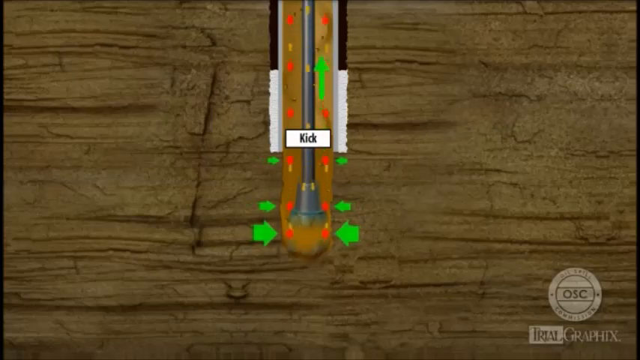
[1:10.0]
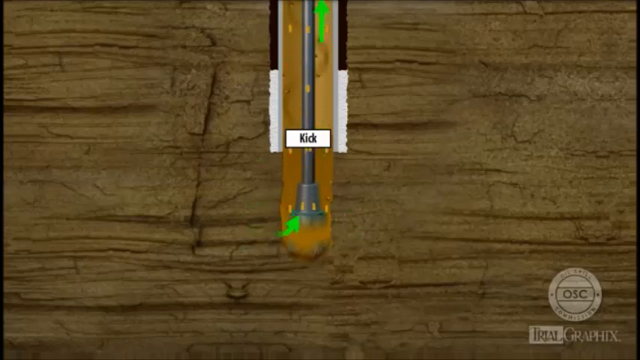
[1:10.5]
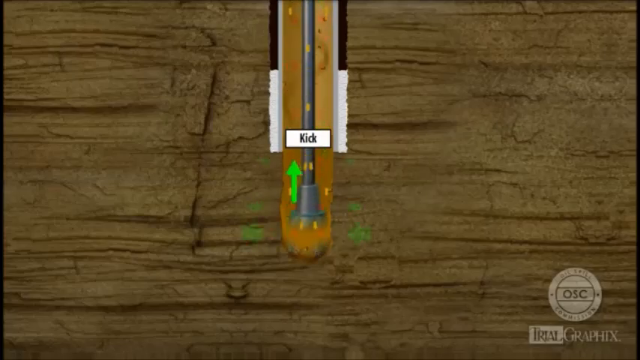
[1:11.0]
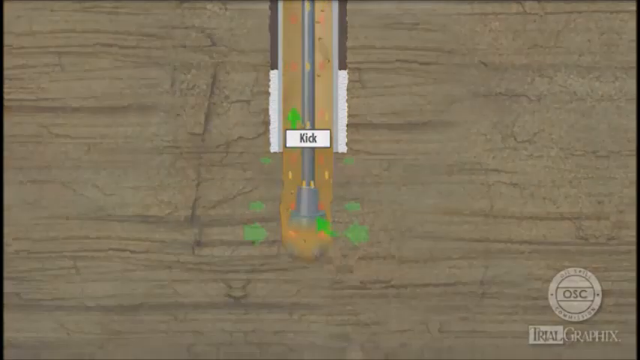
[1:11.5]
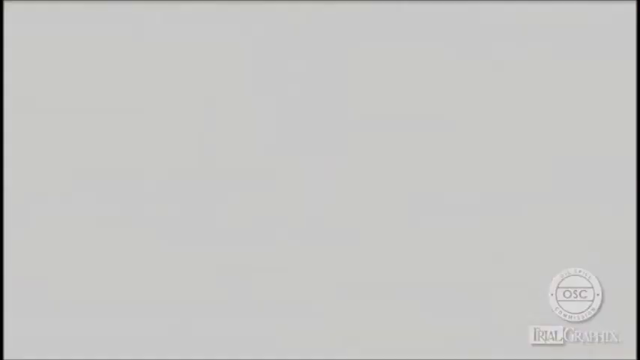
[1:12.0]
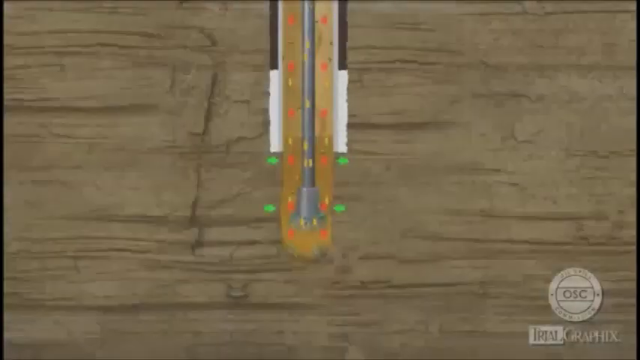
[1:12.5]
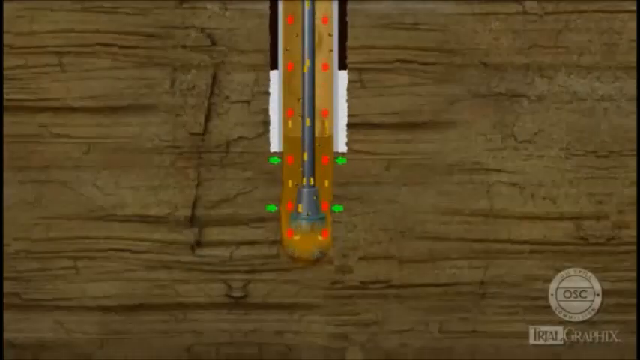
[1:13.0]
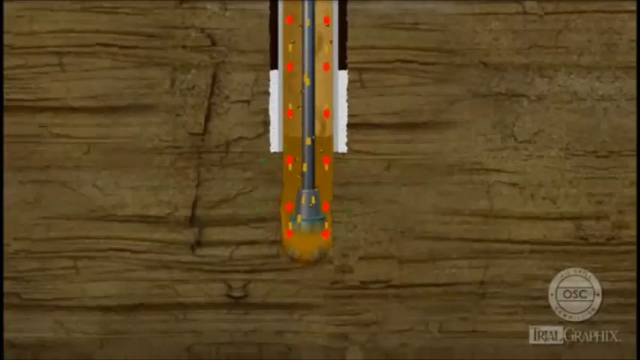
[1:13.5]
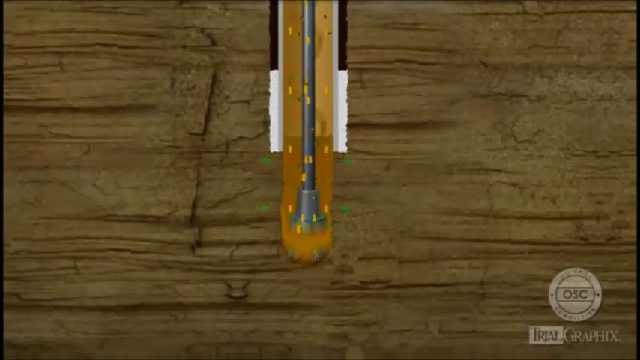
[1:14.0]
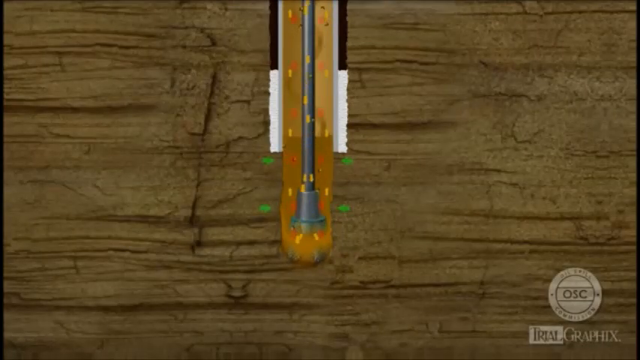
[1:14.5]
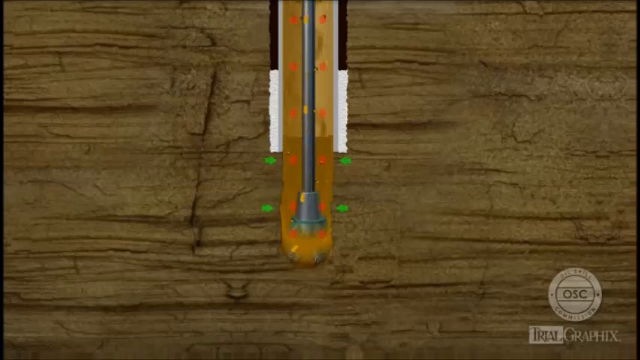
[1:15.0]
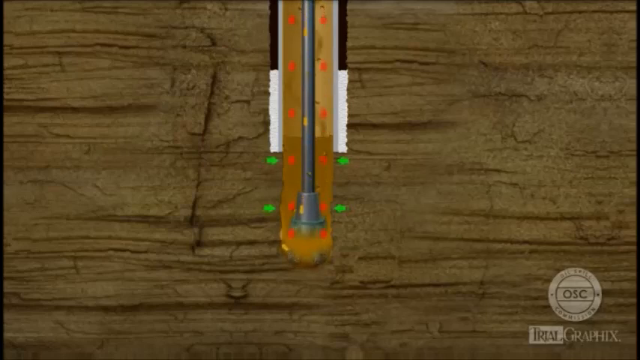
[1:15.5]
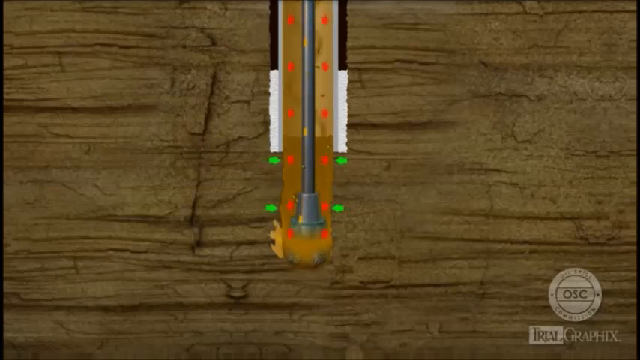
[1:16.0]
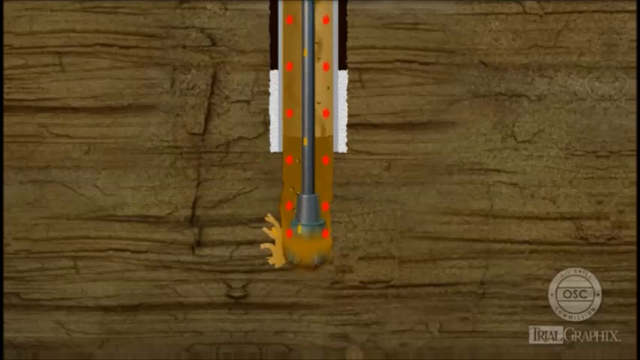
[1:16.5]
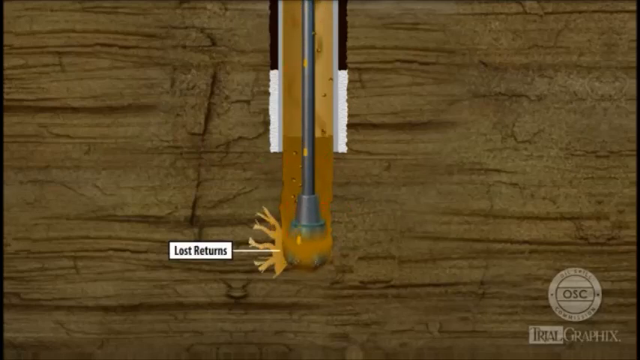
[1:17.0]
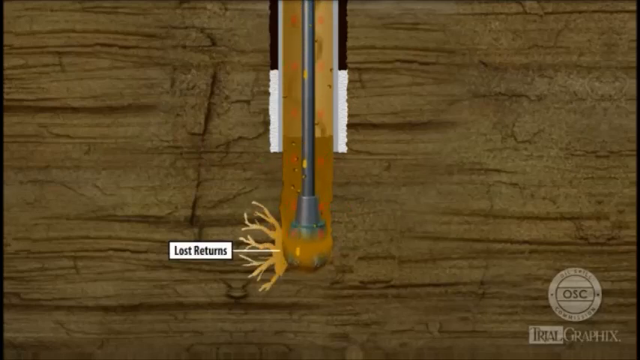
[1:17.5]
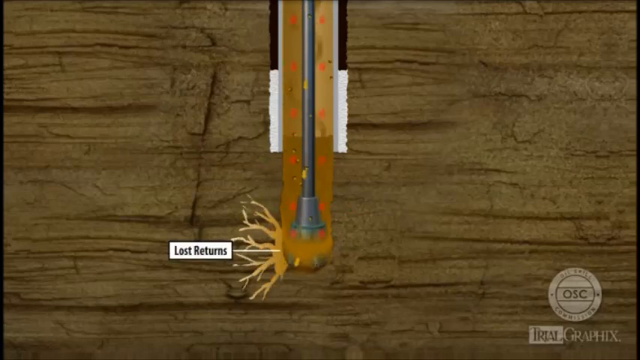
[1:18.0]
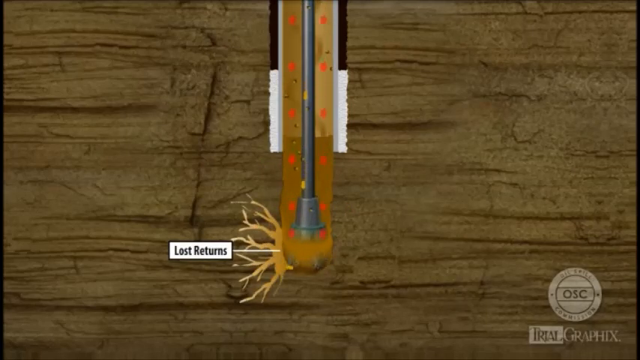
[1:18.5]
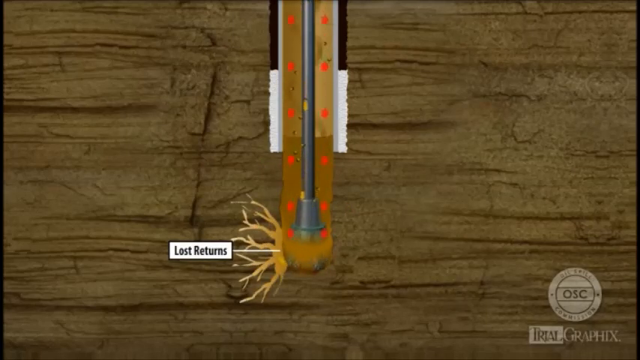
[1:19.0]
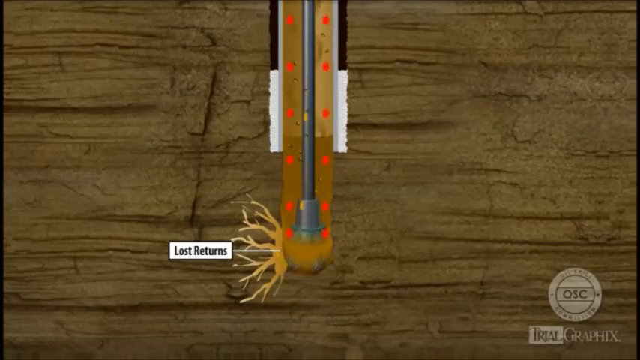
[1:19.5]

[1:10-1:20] The drill continues down the block of wood with several green arrows: four small green arrows point toward the end of the drill, and two larger green arrows right below also point toward the end of the drill. Red and yellow particles move upwards from the drill, possibly representing the progress. The word "kick" appears near the end of the drill in small black font within a white rectangular background. A branch forms at the very tip of the drill, and the scene fades out.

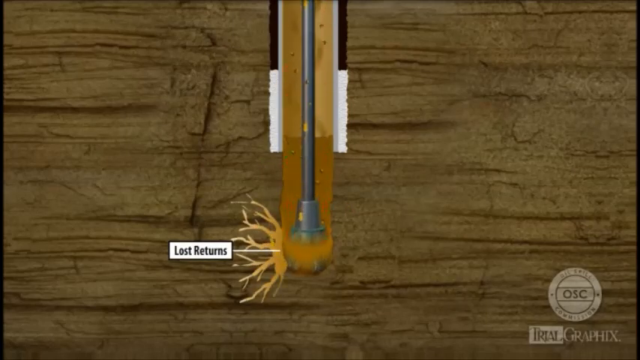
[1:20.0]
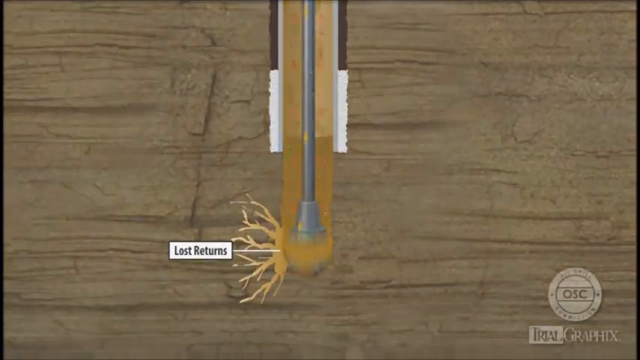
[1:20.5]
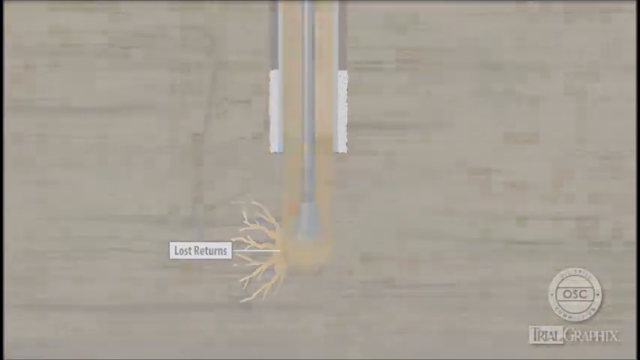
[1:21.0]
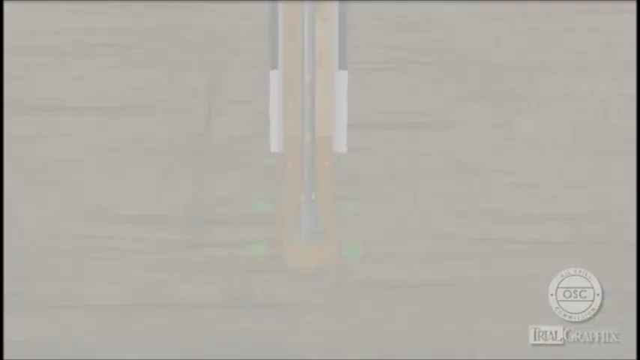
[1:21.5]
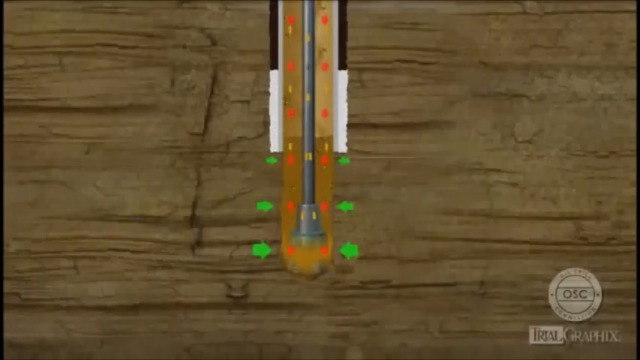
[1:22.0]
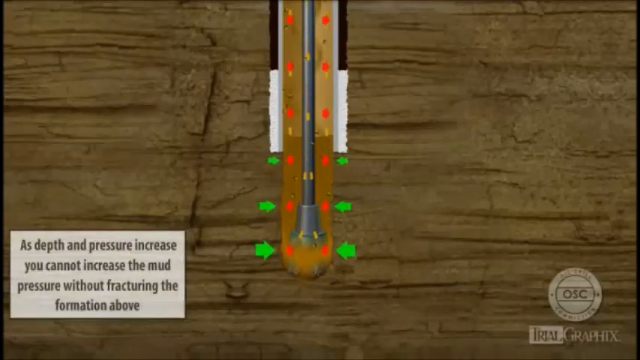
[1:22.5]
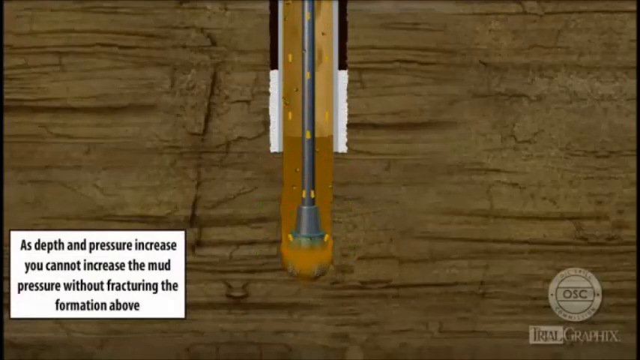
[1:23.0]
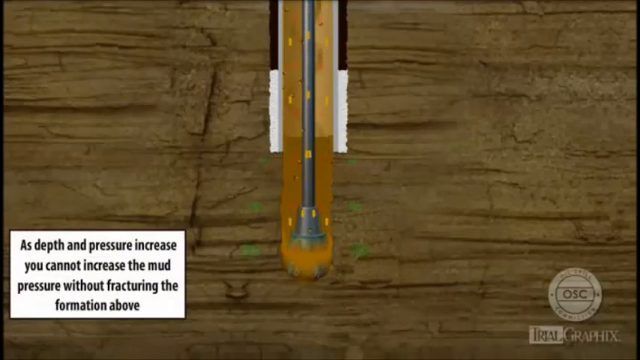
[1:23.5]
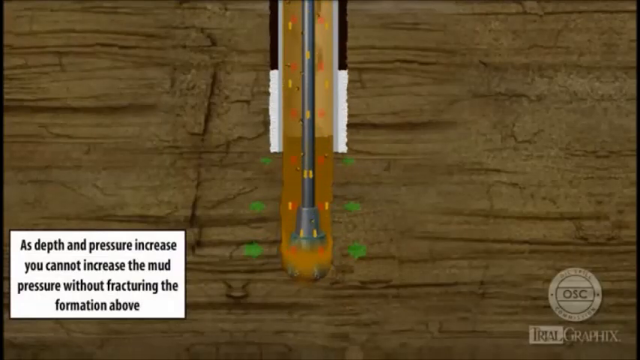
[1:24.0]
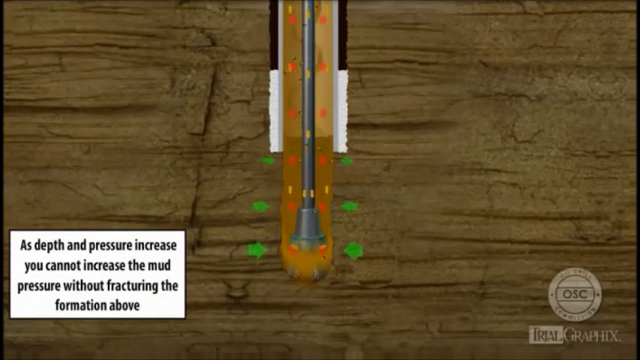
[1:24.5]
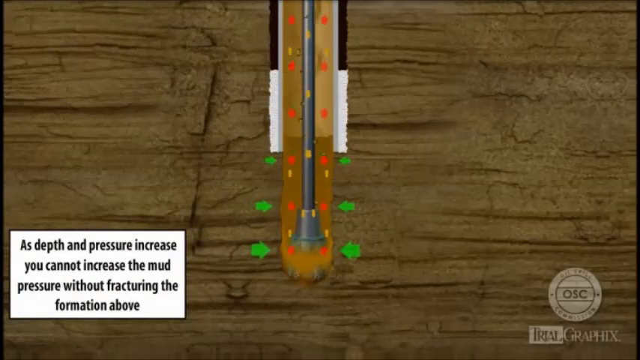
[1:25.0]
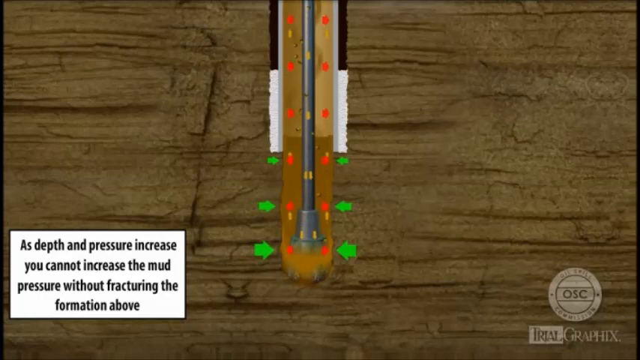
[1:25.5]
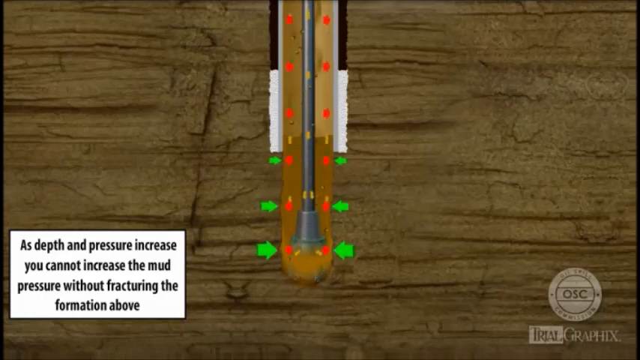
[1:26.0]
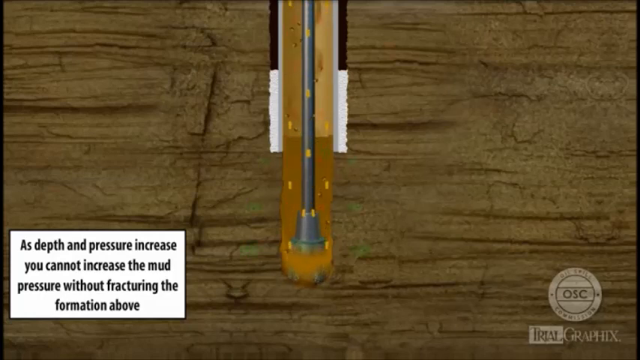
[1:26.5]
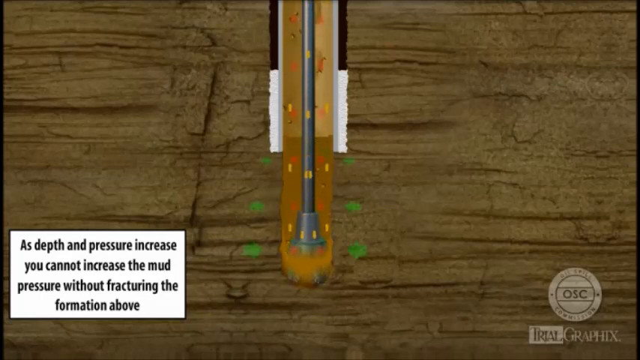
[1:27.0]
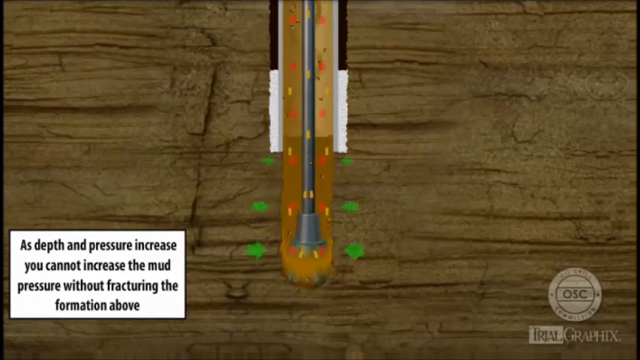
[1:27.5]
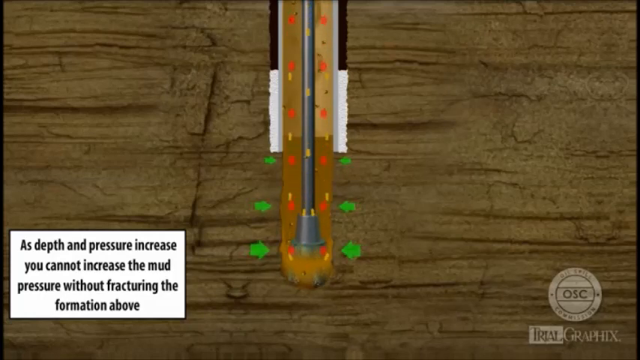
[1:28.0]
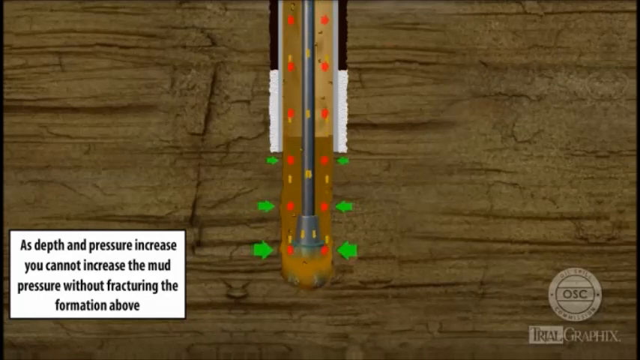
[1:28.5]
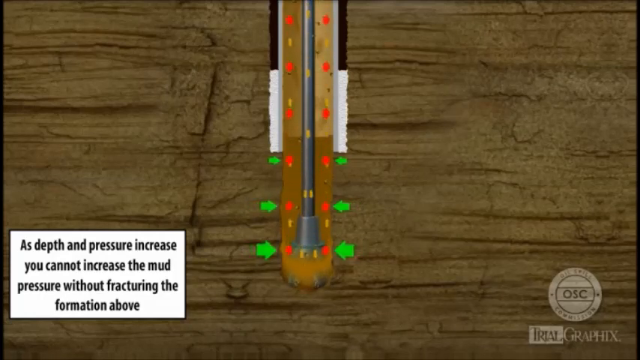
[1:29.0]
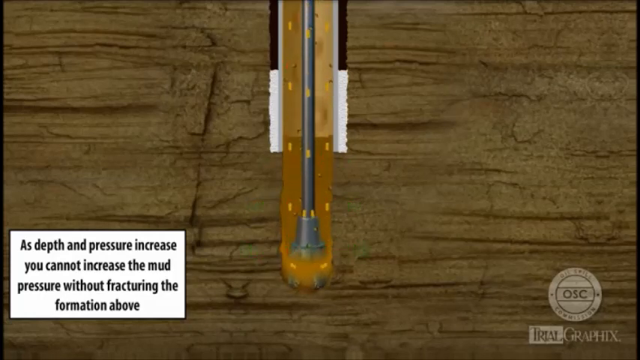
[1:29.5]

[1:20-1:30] The drill goes further and further down the block of wood. Some sort of branch appears at the very tip of the drill, and the words "Lost Returns" appear to the left of that branch in small black font within a rectangular white background, pointing toward the tip of the drill. The scene fades out in white, and then the words "As depth and pressure increase you cannot increase the mud pressure without fracturing the formation above" appear in black font toward the bottom left. The drill continues moving down the block of wood.